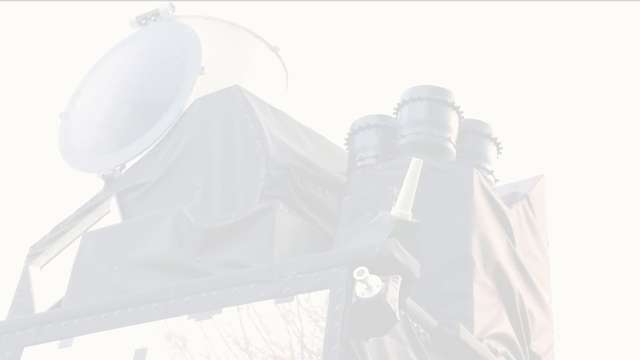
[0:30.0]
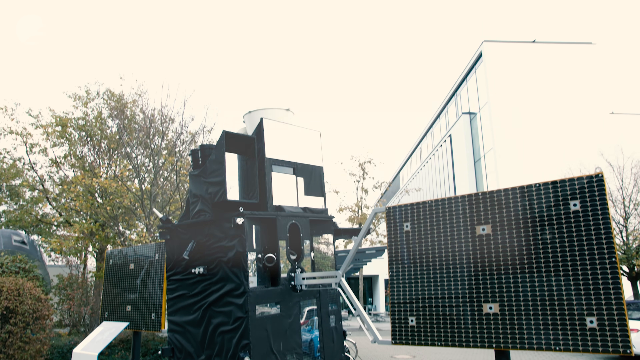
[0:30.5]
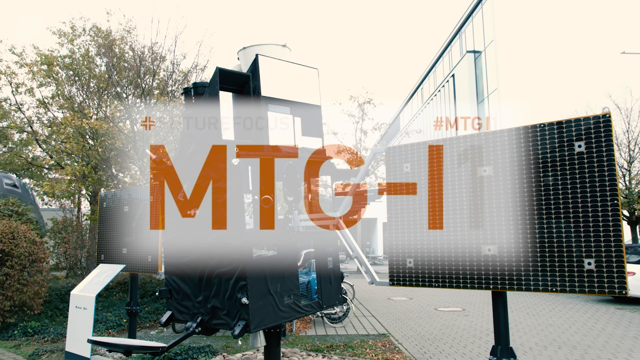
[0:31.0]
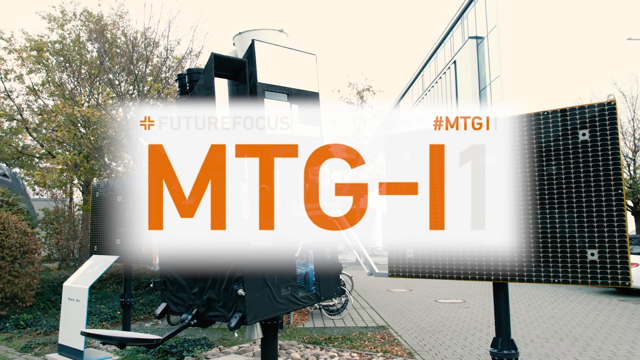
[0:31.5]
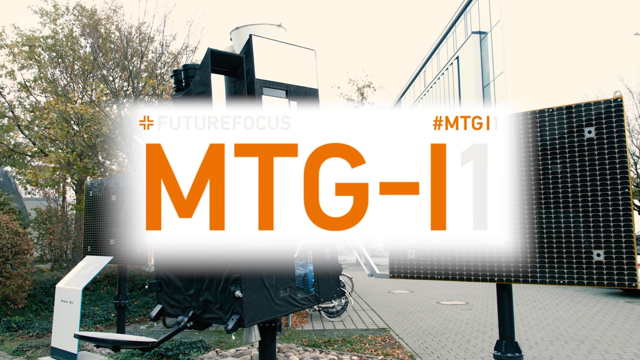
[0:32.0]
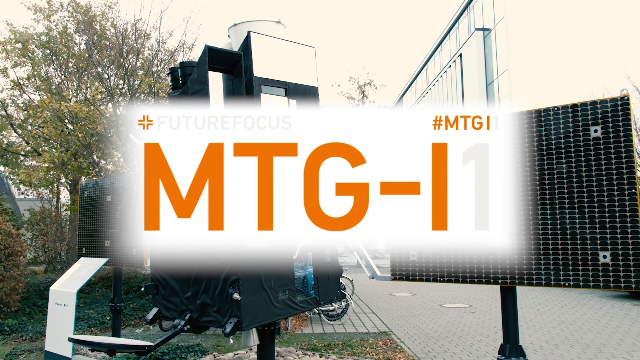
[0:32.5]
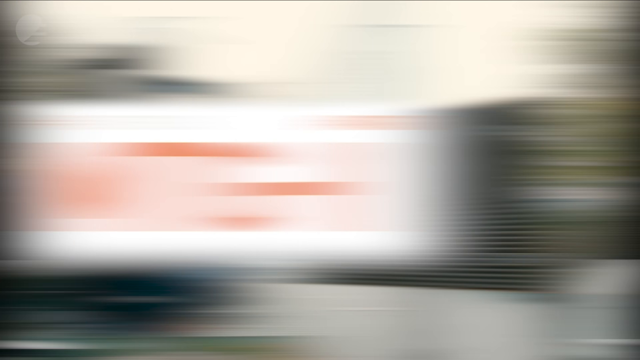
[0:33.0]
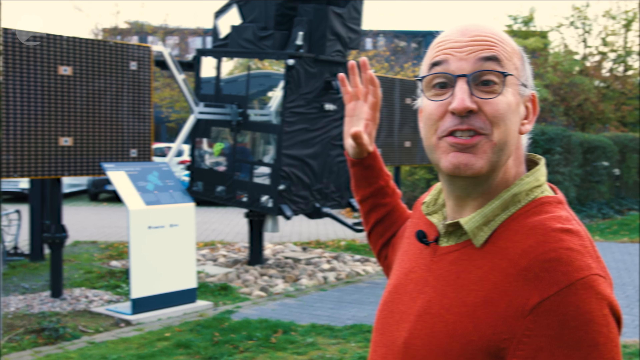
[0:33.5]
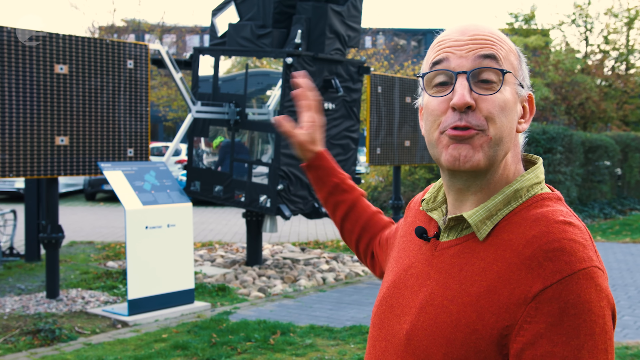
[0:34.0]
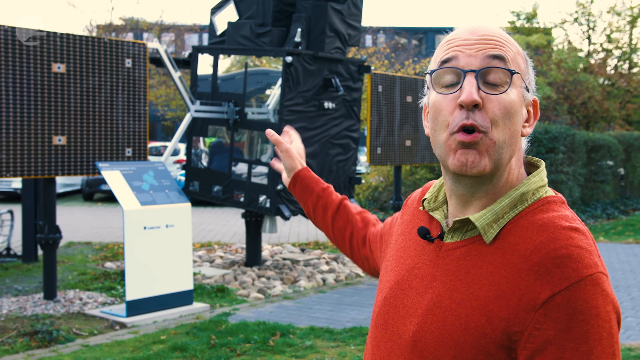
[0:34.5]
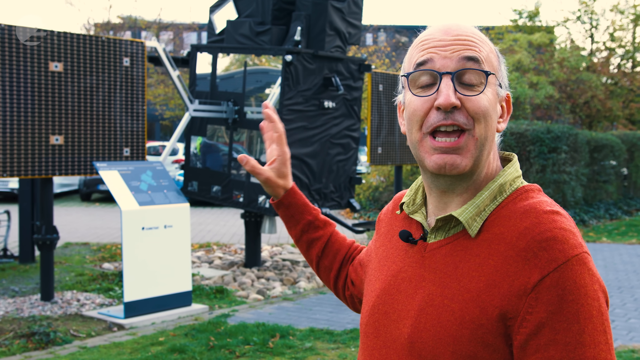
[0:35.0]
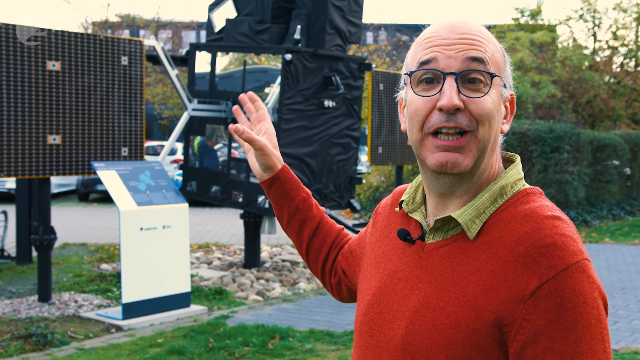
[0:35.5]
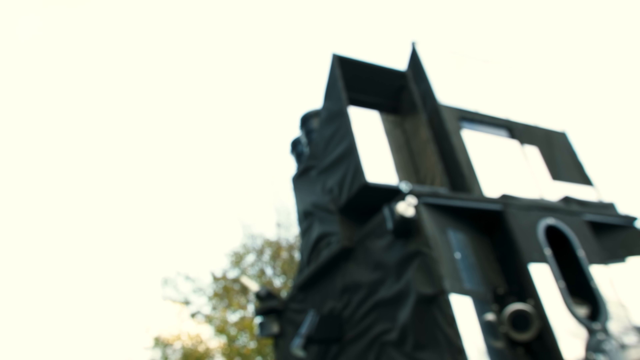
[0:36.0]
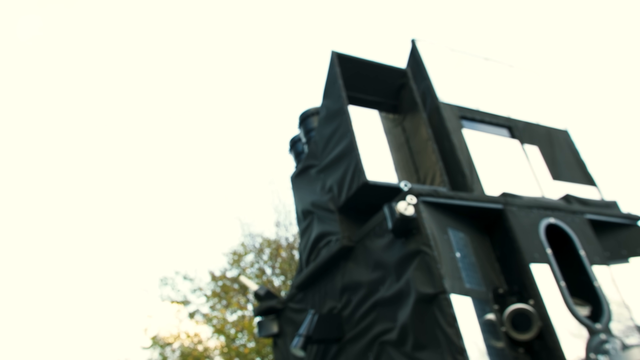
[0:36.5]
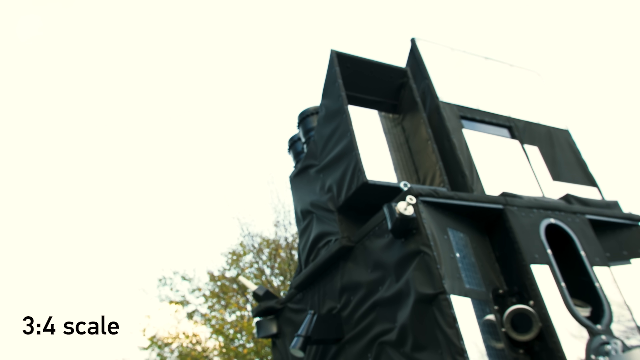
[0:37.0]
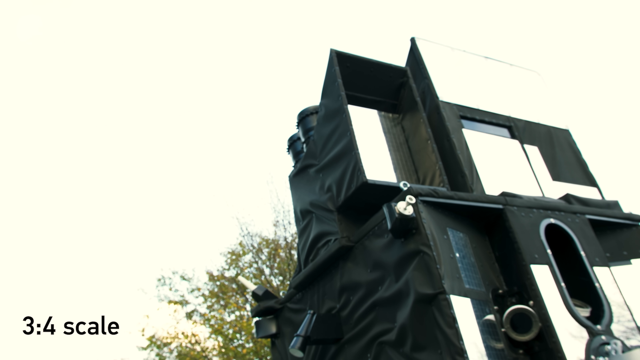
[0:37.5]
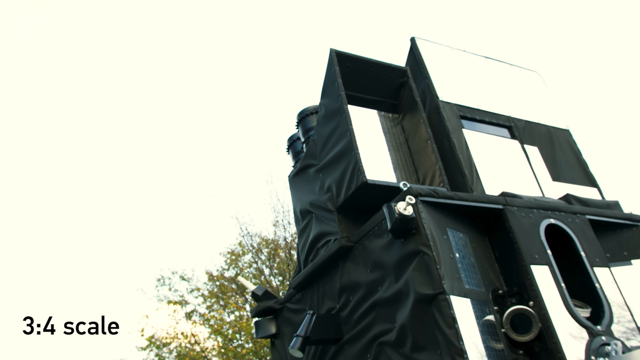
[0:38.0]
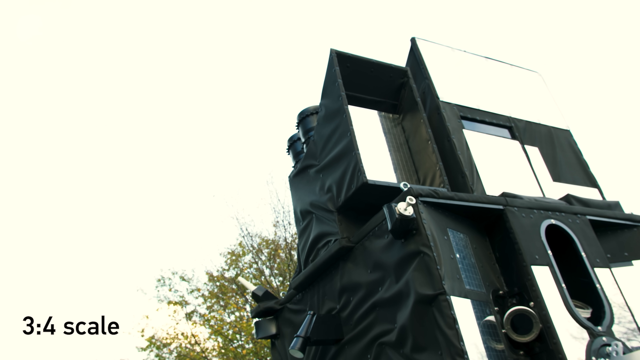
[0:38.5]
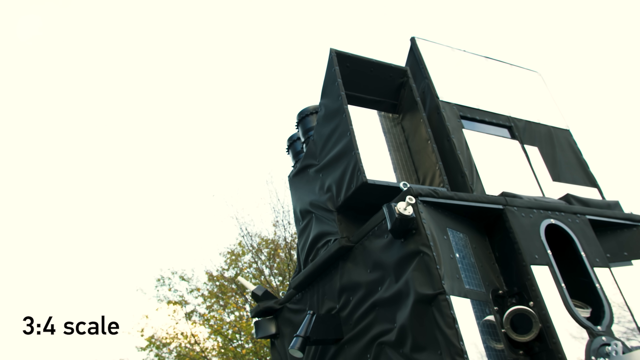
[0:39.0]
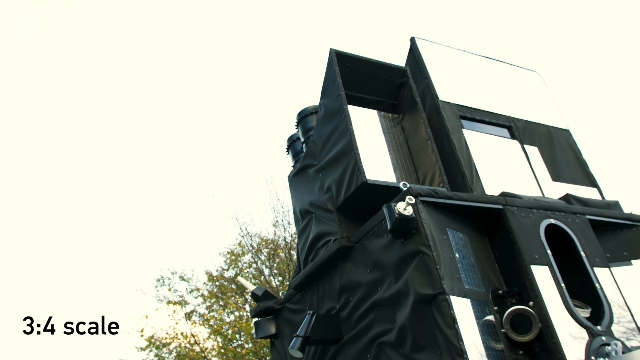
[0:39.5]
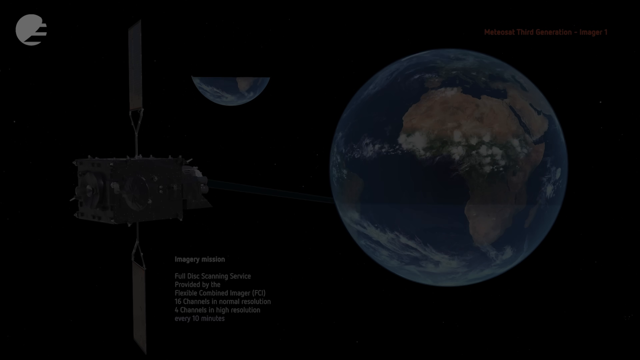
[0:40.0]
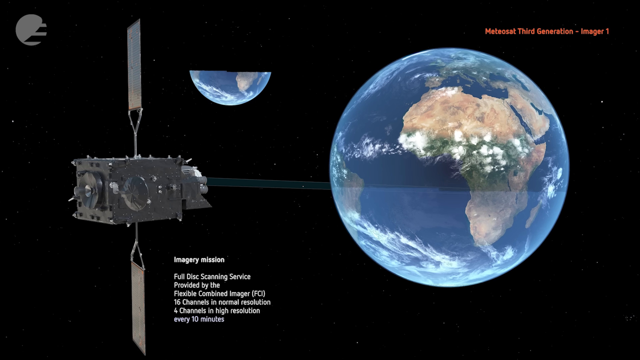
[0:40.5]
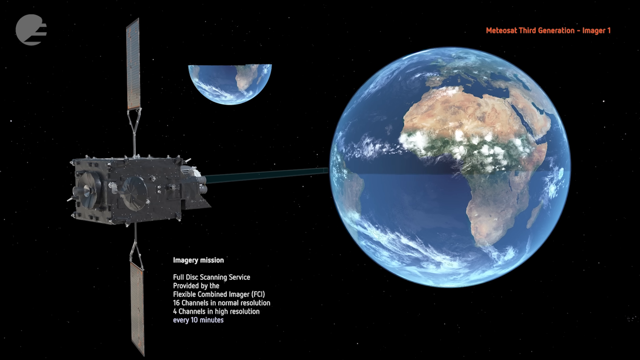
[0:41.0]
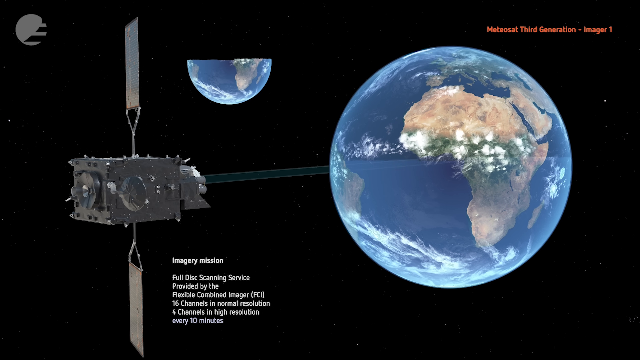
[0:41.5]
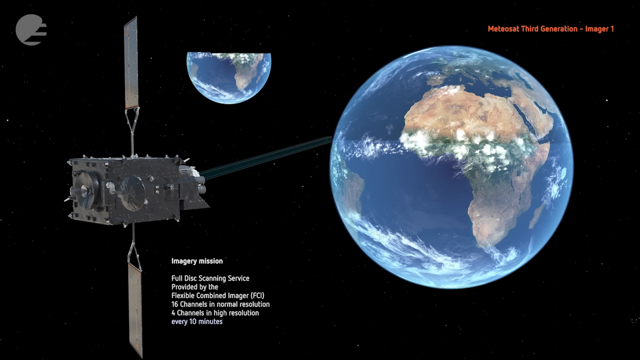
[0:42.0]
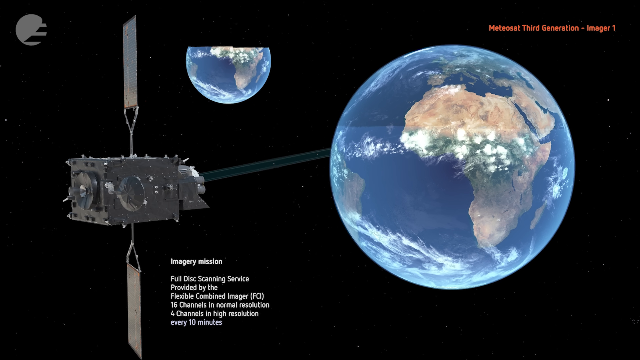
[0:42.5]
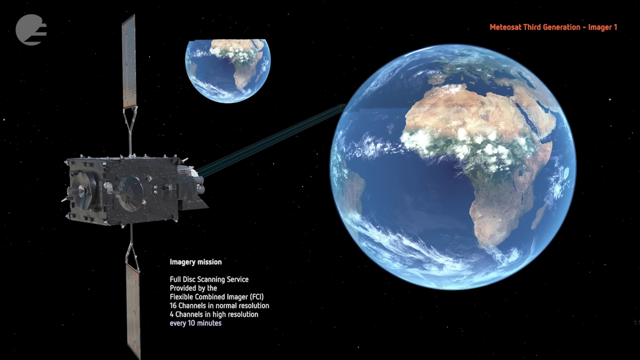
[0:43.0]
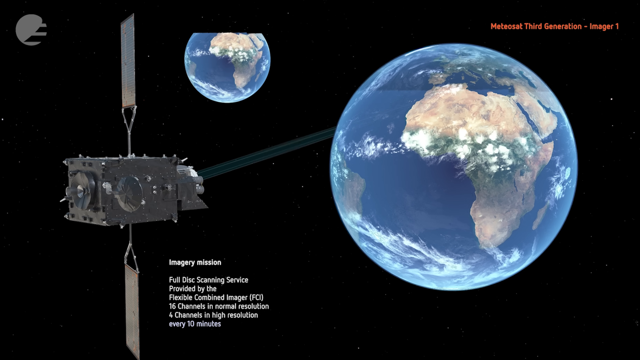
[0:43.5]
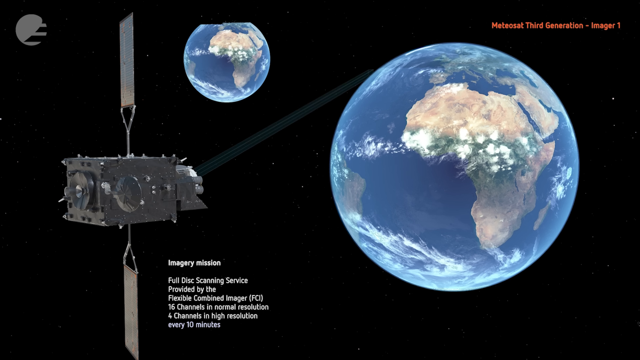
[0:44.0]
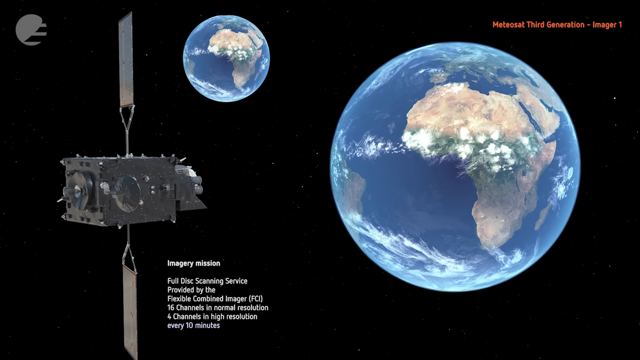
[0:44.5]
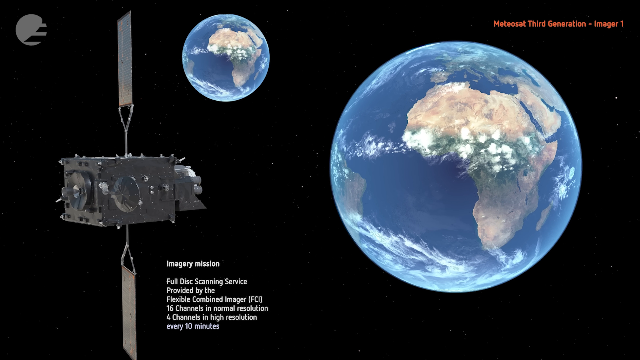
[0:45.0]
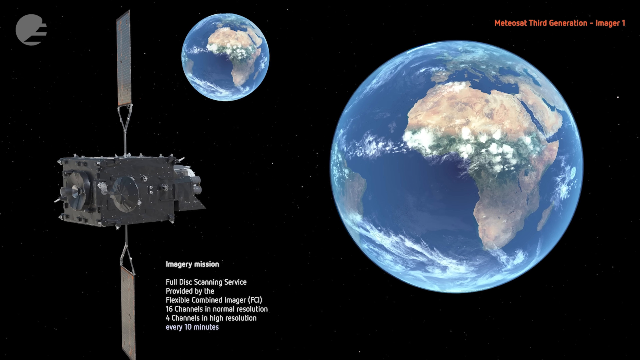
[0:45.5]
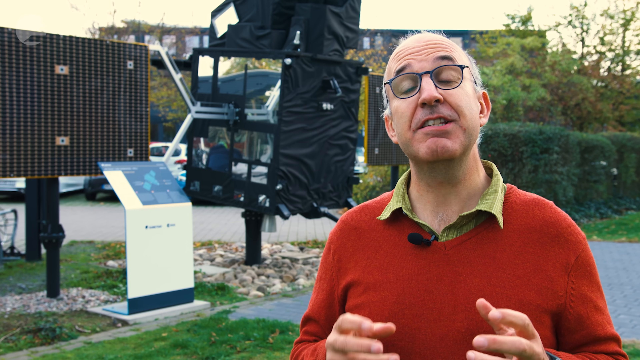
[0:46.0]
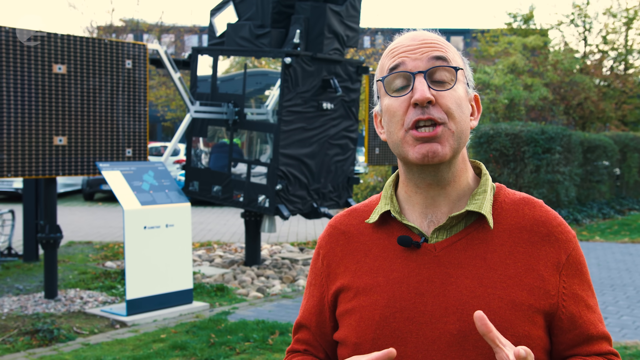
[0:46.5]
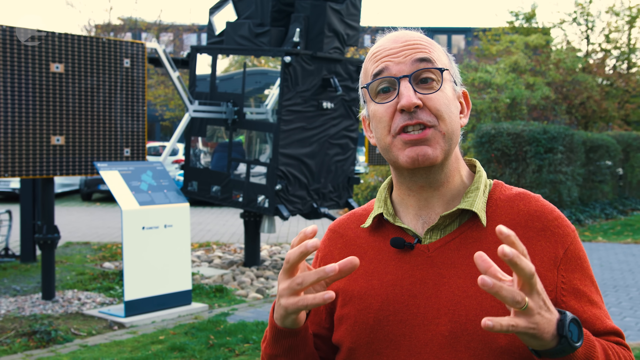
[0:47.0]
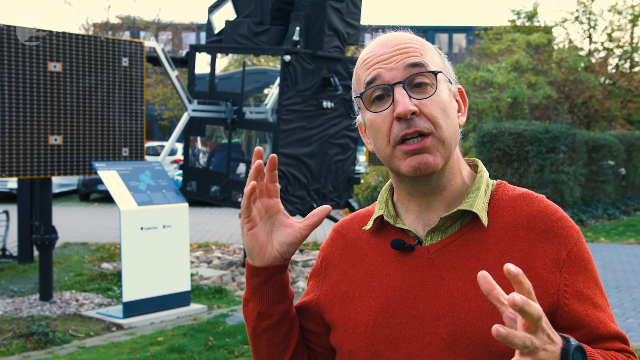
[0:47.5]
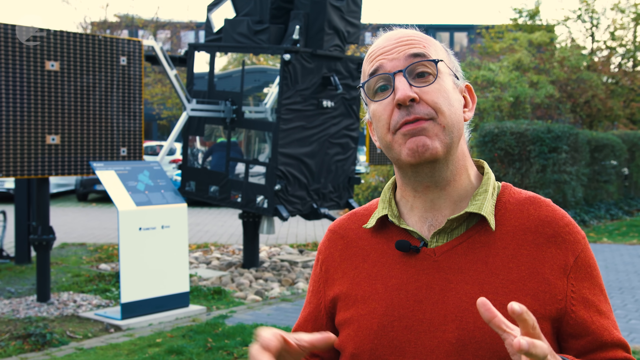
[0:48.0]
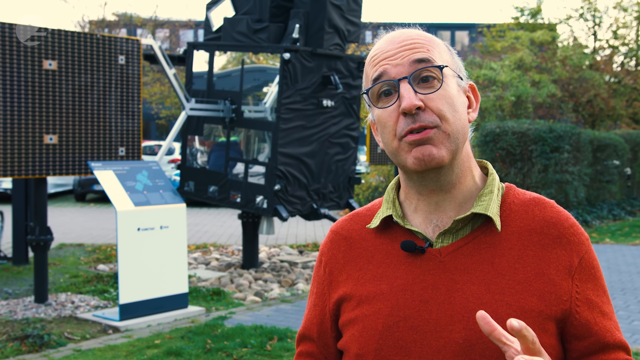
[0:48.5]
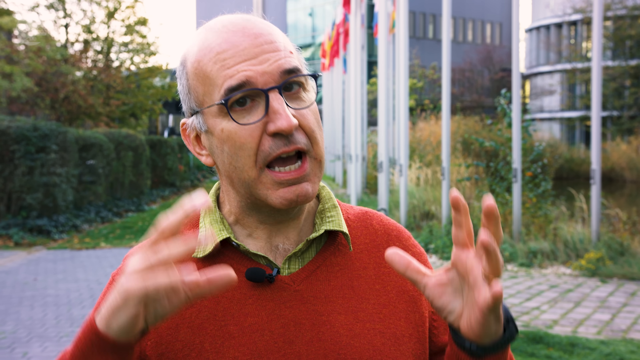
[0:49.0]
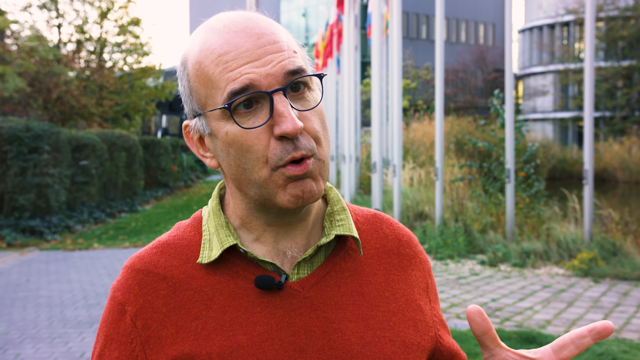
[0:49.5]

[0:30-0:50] Outside, with a tree and a building in the background, something about the size of a car is covered in black fabric, and few details are visible. Orange letters reading "MTG-I" come up on the screen, along with the words "future focus". The view switches to a man talking to the camera, wearing a green collared shirt, a bright red V-neck long-sleeve sweater and glasses. He gestures with his right hand toward the object, and the camera sort of zooms in on it. It looks like it has some mirrors, has black and white surfaces, is quite tall, and has black fabric along its side. The image fades to a picture of the Earth showing Africa, with a satellite on the left side that has vertical panels, probably solar panels, coming off it. Text reads "imagery mission, full disc scanning service provided by the flexible combined imager, 16 channels in normal resolution, four channels in high resolution every 10 minutes". The view returns to the man talking, standing outside a building.